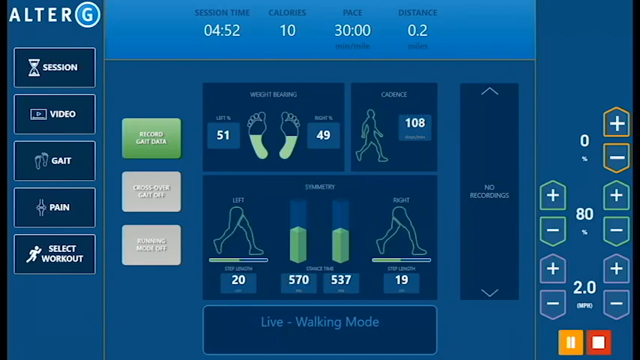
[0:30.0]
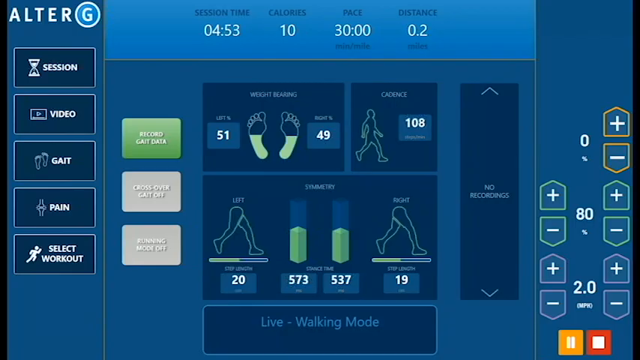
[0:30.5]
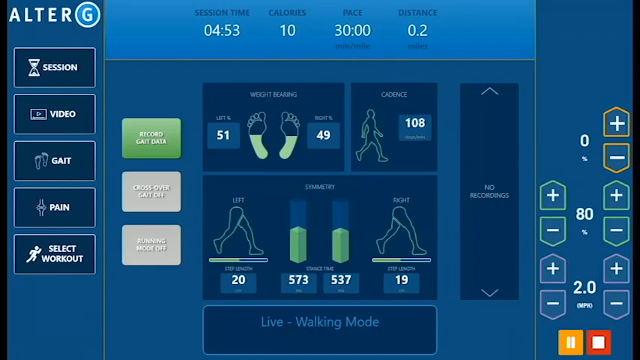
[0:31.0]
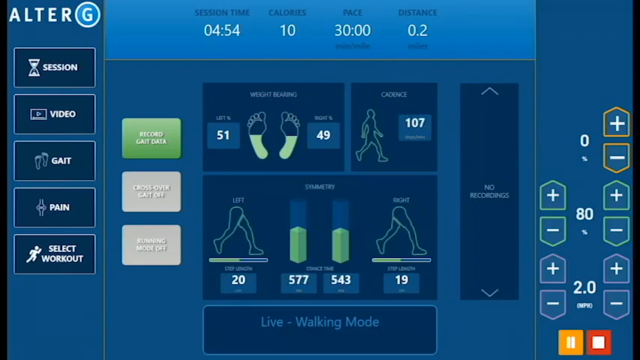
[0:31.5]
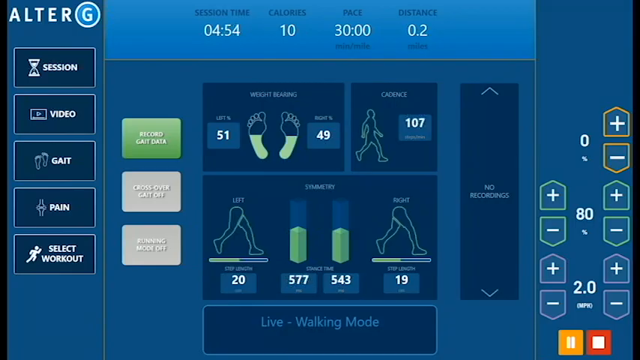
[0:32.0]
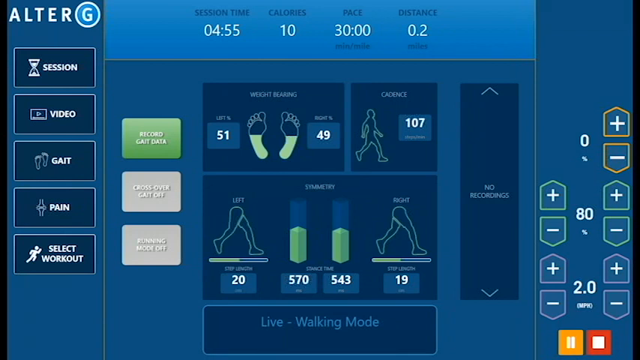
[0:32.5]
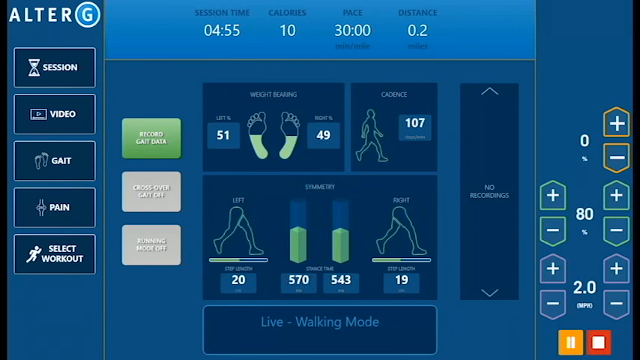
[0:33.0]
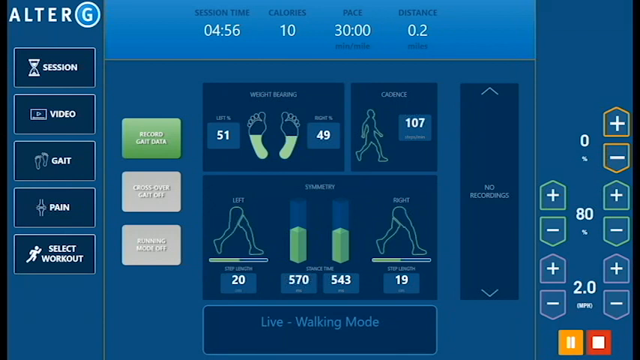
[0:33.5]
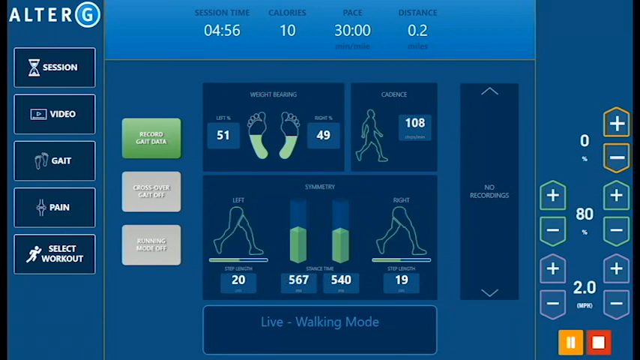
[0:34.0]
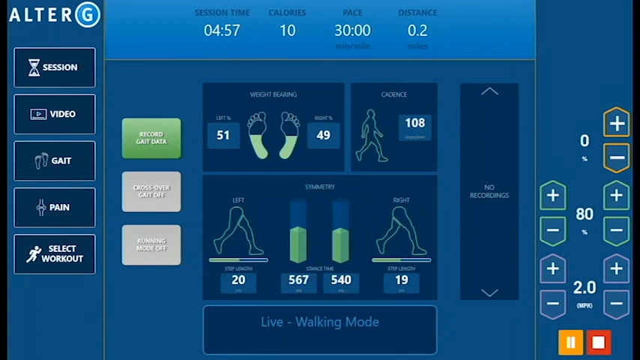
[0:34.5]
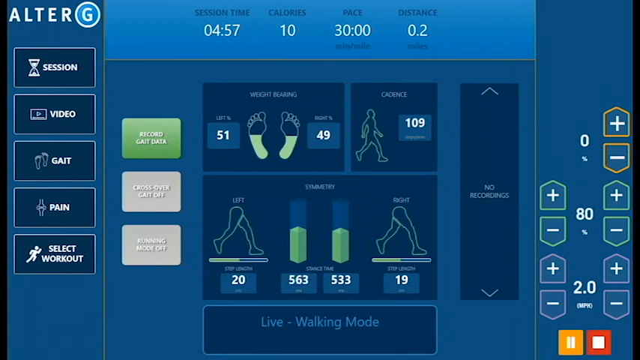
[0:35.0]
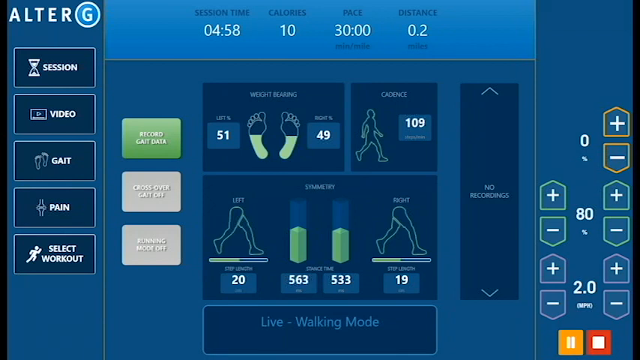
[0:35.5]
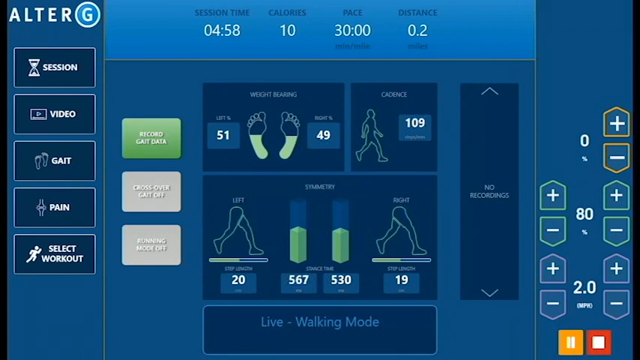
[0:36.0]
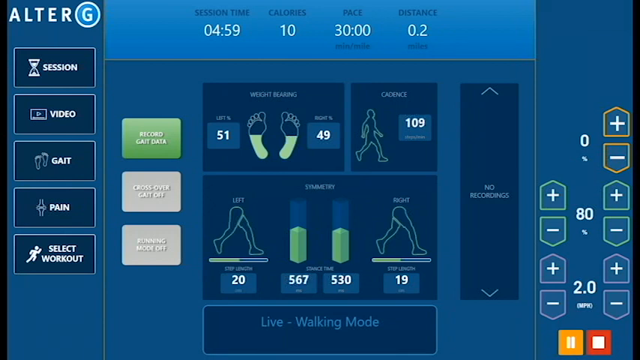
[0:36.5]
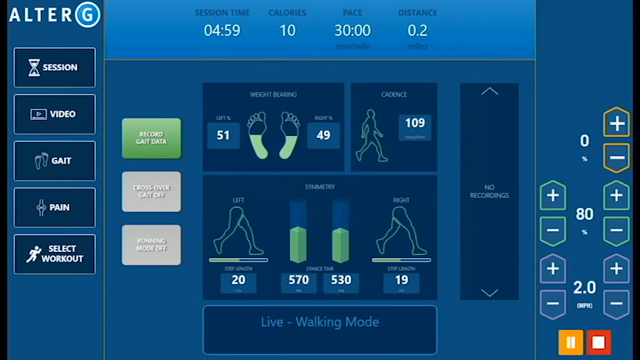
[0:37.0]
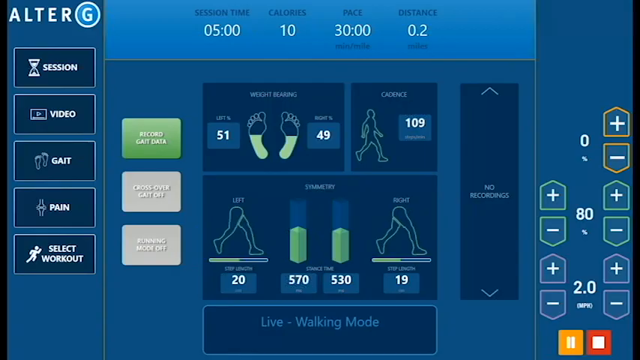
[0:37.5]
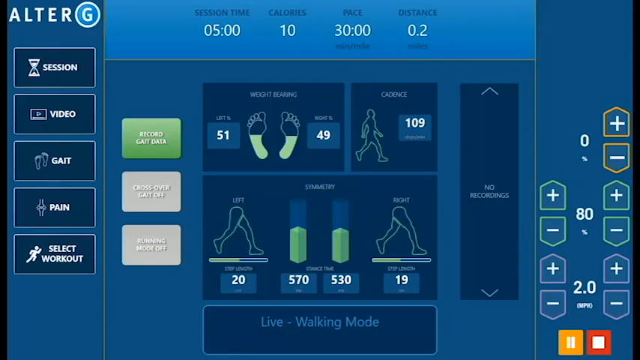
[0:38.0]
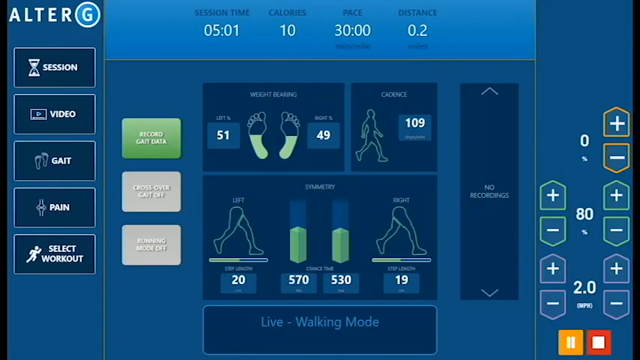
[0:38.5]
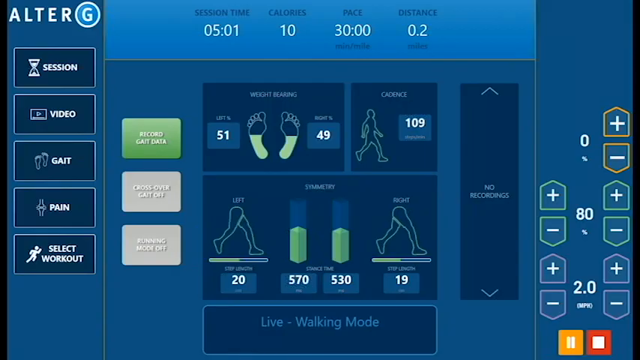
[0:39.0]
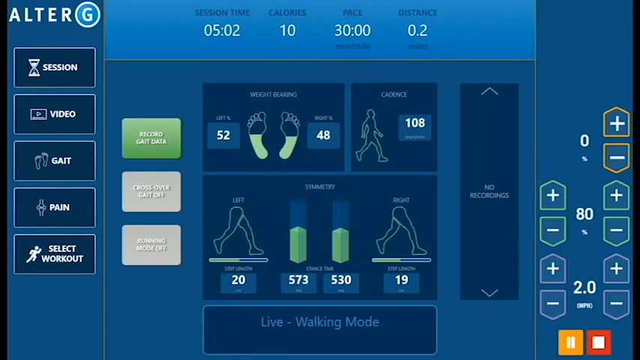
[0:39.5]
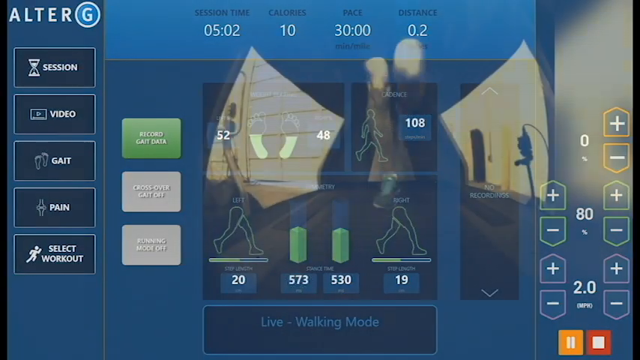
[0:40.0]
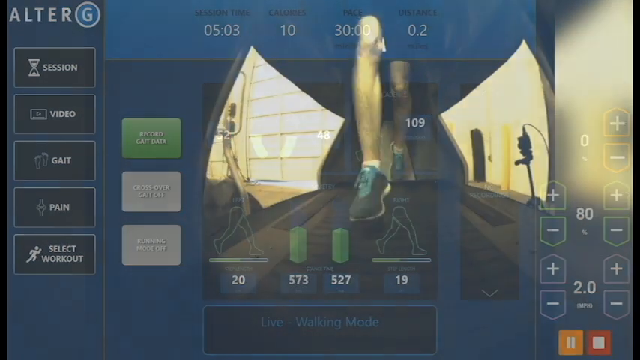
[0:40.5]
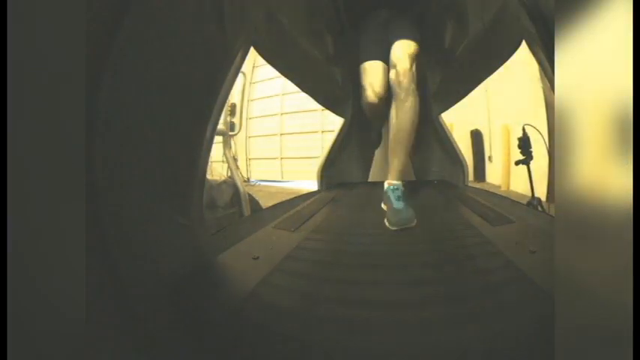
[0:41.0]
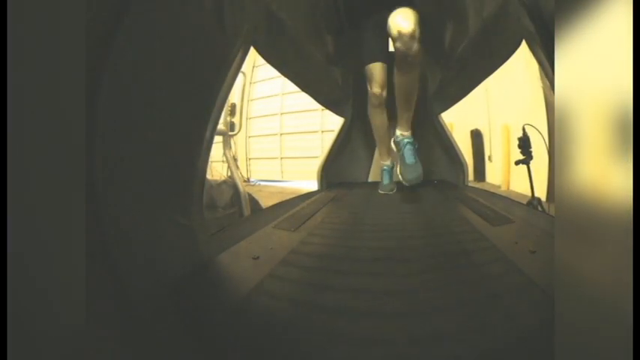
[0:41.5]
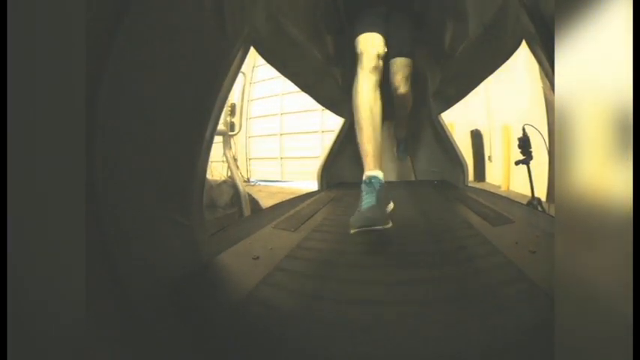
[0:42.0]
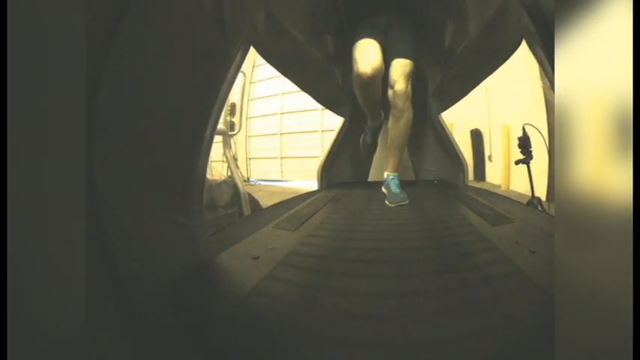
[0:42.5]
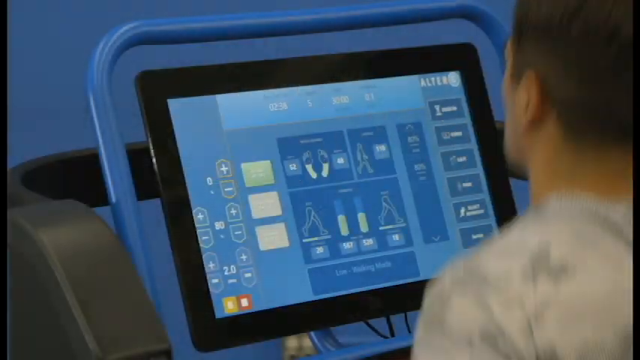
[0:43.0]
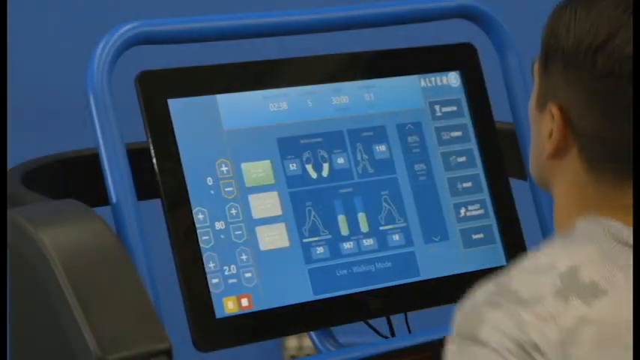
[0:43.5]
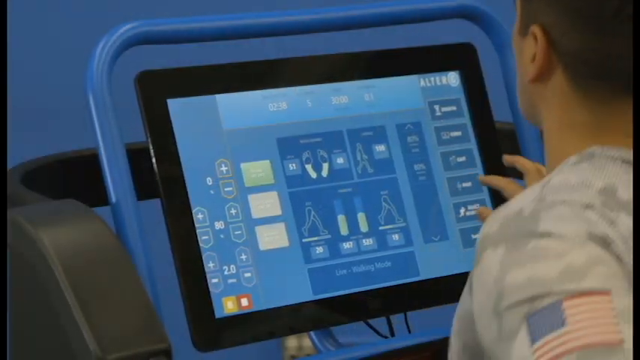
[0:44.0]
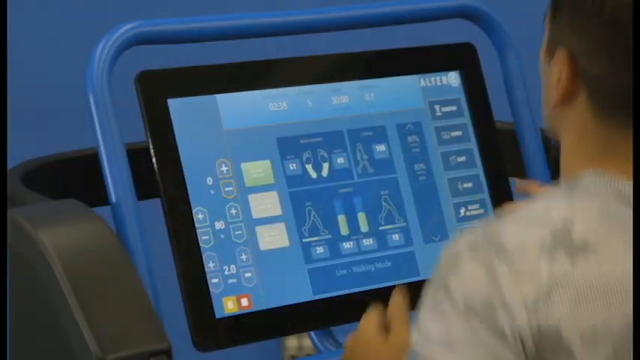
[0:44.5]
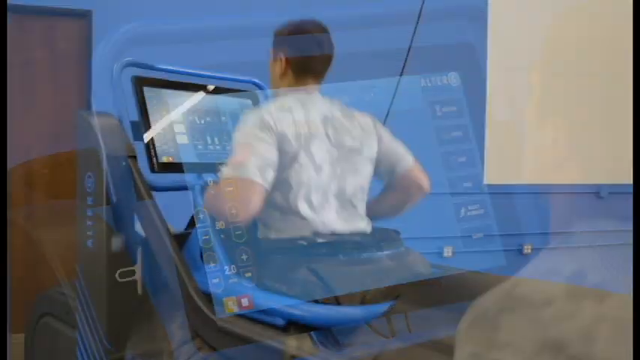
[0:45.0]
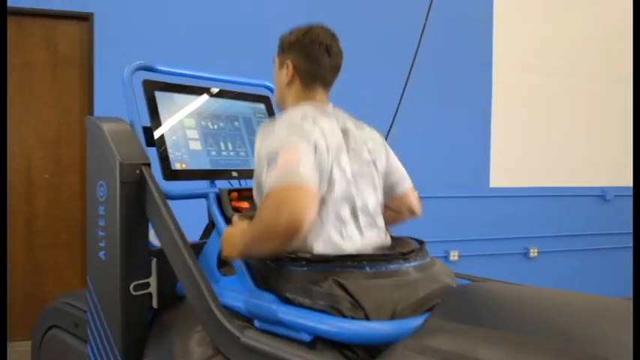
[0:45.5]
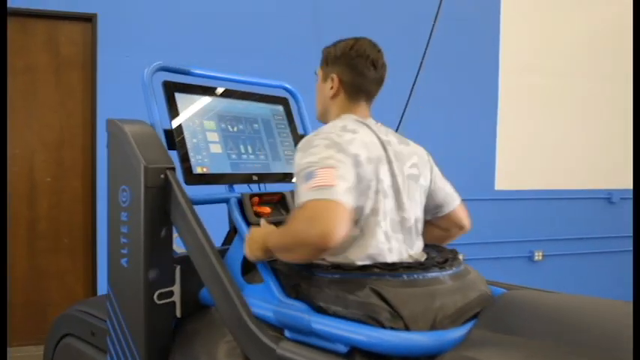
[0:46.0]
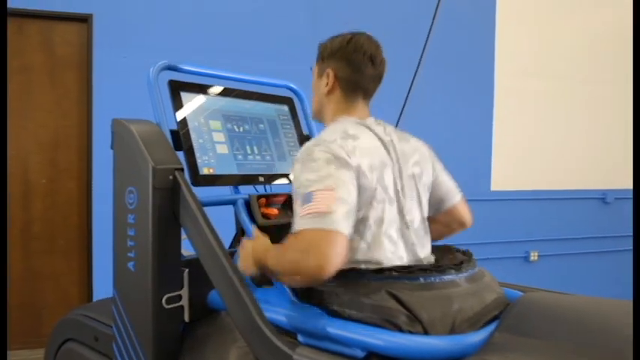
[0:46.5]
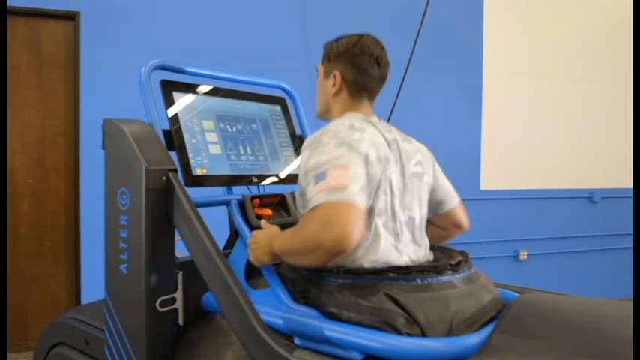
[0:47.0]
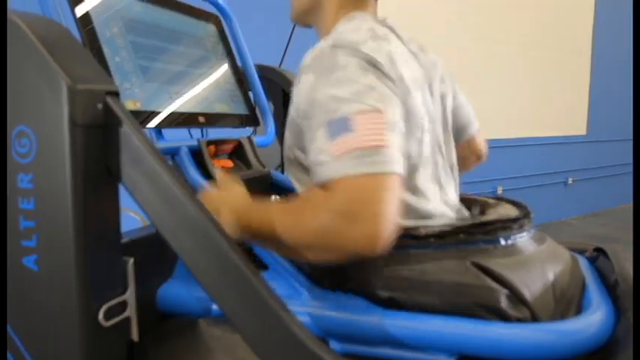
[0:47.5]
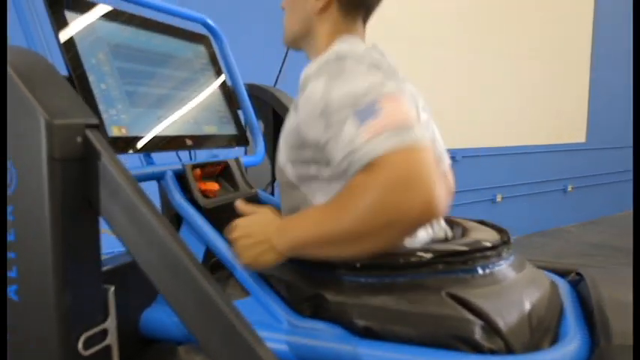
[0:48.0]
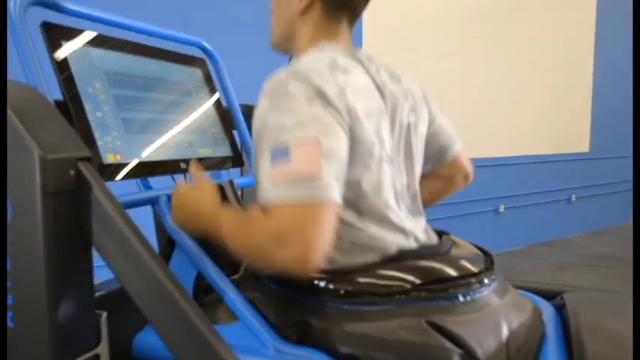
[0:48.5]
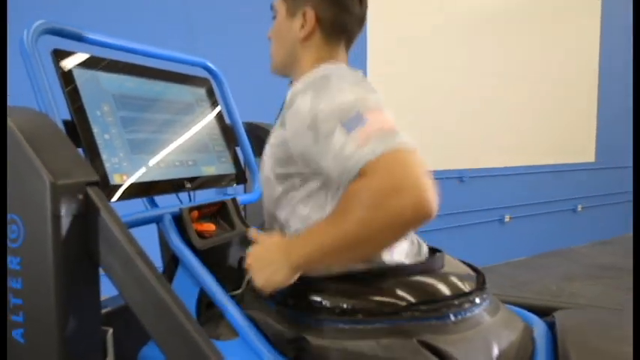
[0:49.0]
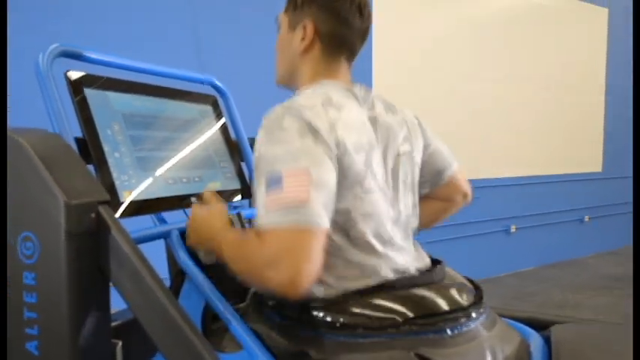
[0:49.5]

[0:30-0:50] An LCD-style fitness statistics monitor screen is split into sections. On the left is a navigational pane with five rectangular buttons for session, video, gait, pain and select workout. Along the top are four statistics, session time, calories, pace and distance, which are increasing. The right pane has navigational buttons with plus and minus symbols plus a pause and a stop button. In the centre are infographics of the body. The video then changes to a floor-level view looking directly at the front of someone running on a treadmill, with their lower legs visible running towards the camera. Another viewpoint follows, showing the man on the treadmill from behind as he touches the LCD screen with his right hand while jogging on the spot, his arms bent at right angles and moving up and down.